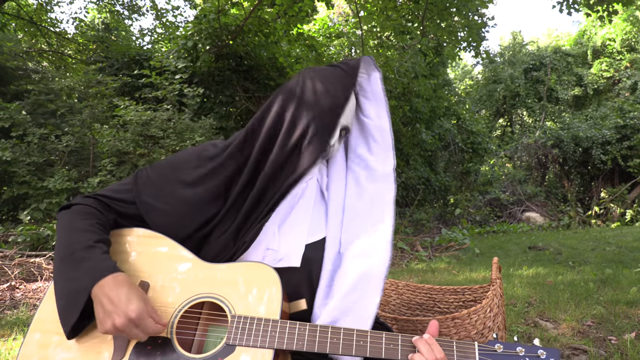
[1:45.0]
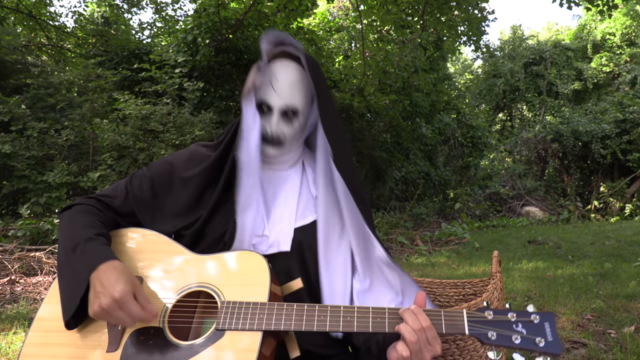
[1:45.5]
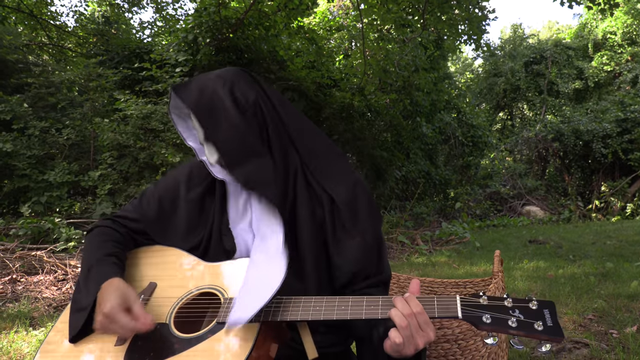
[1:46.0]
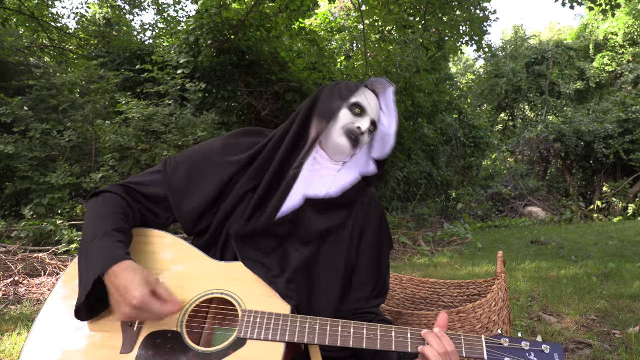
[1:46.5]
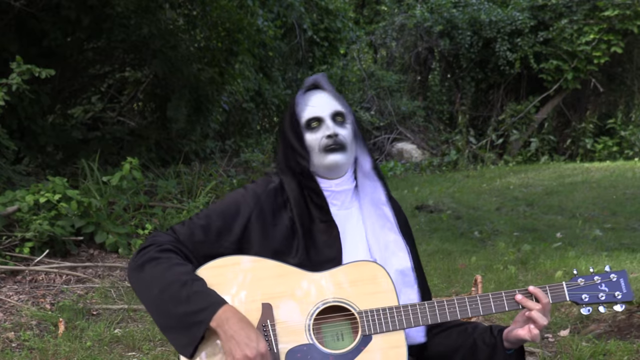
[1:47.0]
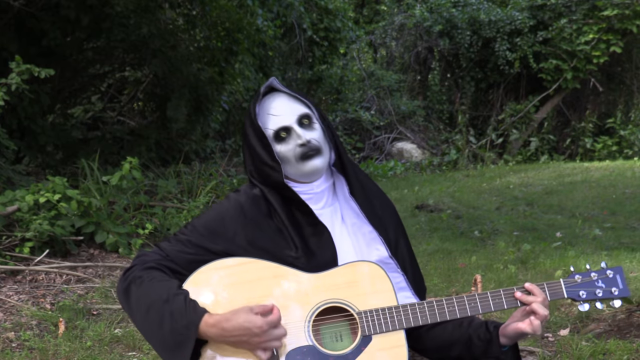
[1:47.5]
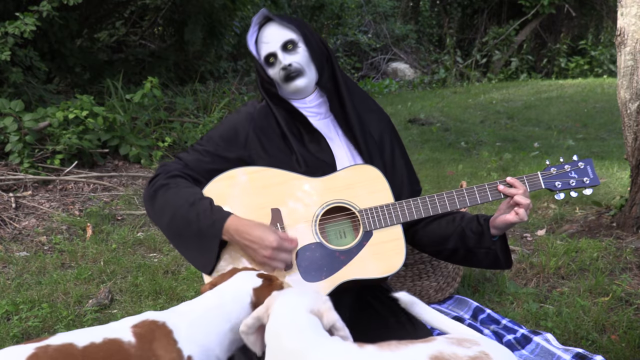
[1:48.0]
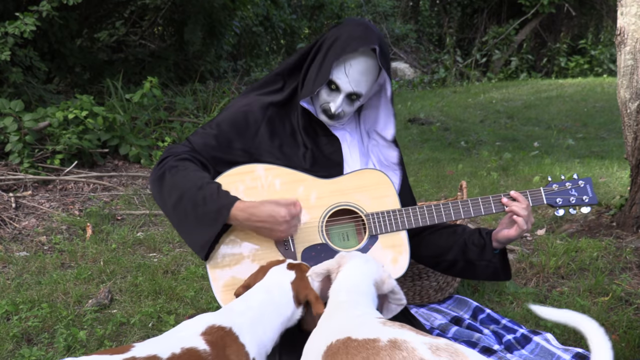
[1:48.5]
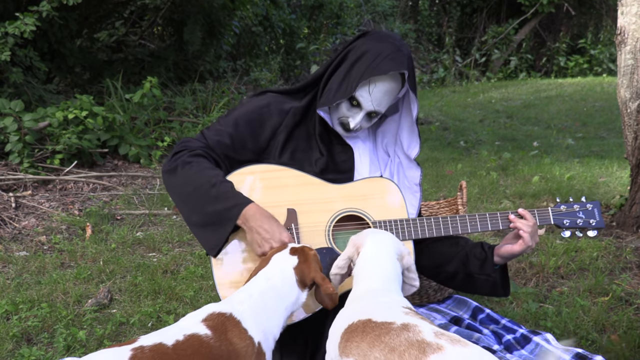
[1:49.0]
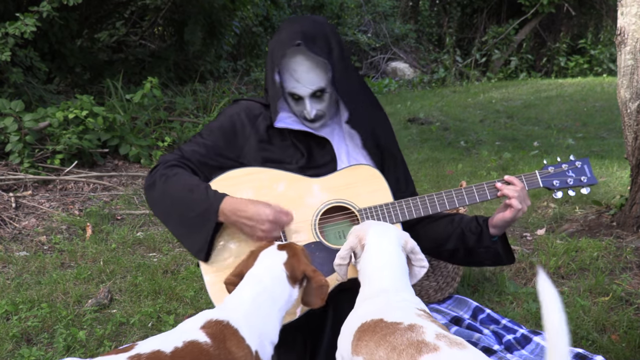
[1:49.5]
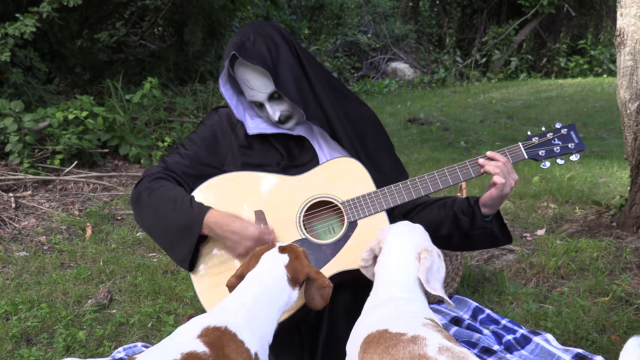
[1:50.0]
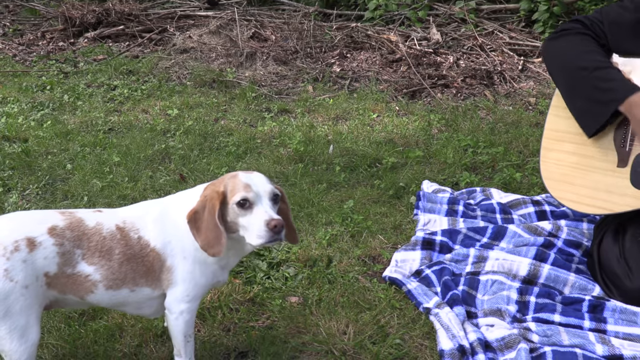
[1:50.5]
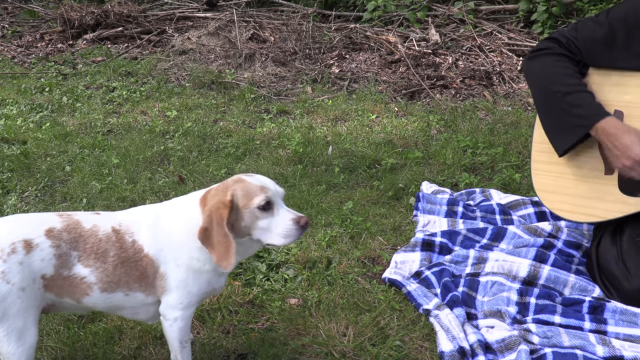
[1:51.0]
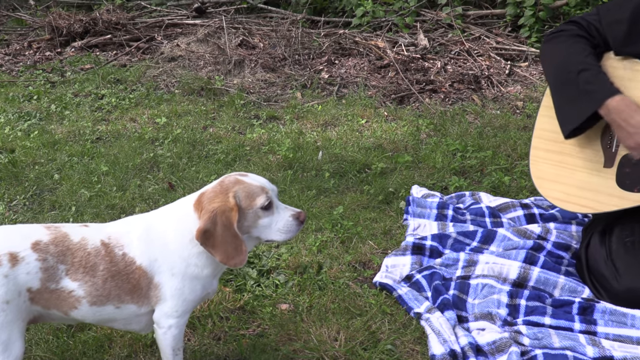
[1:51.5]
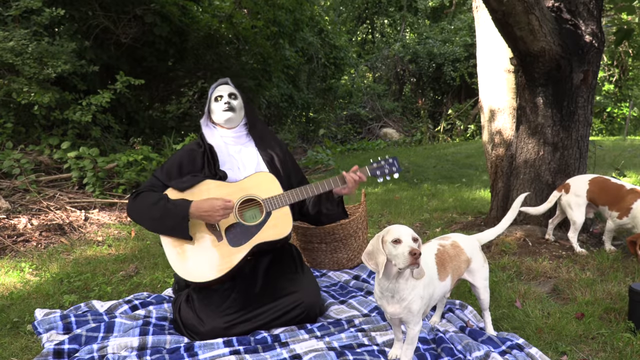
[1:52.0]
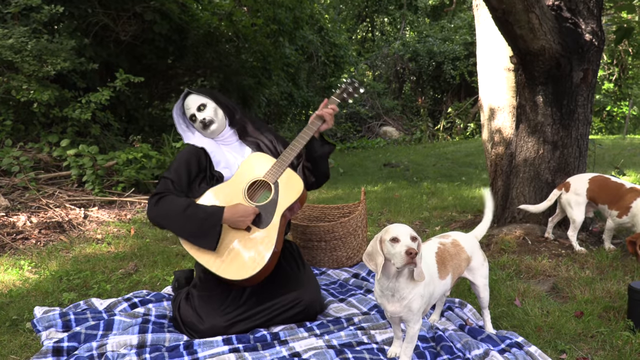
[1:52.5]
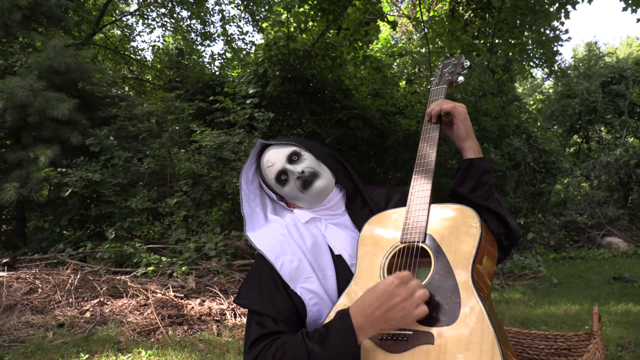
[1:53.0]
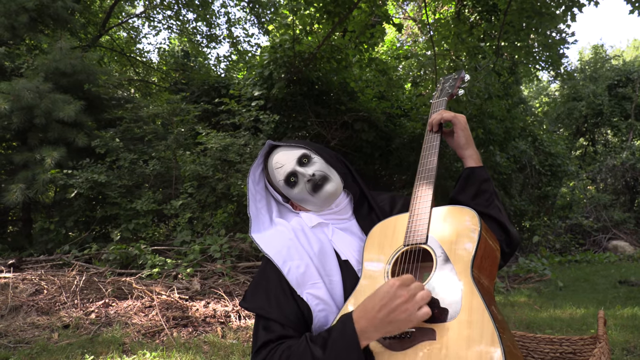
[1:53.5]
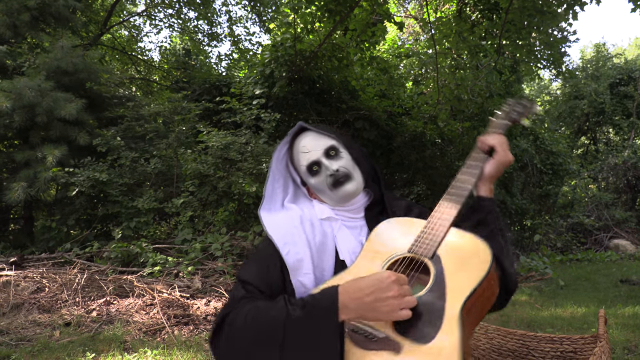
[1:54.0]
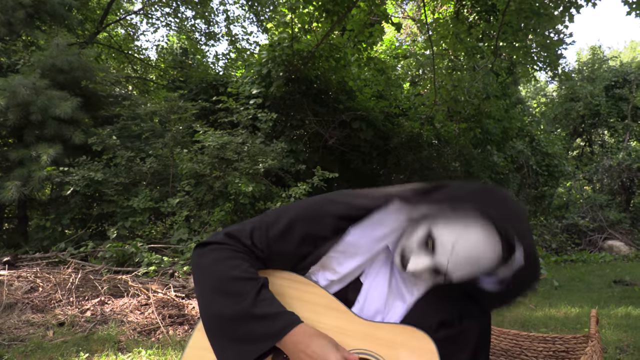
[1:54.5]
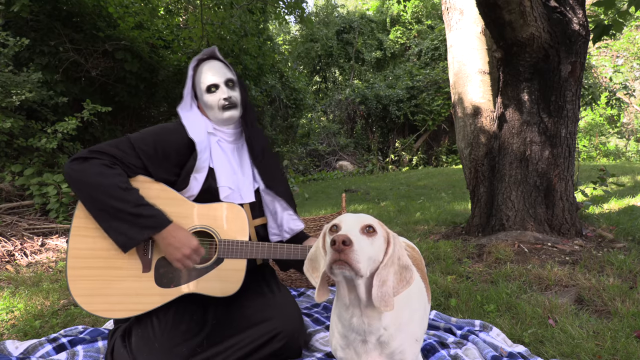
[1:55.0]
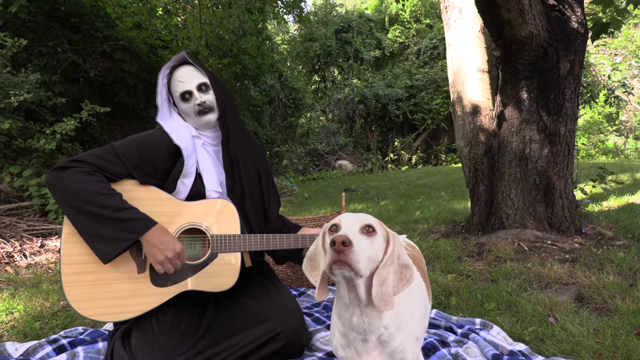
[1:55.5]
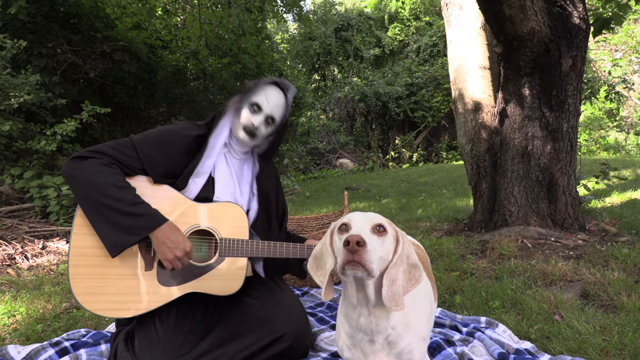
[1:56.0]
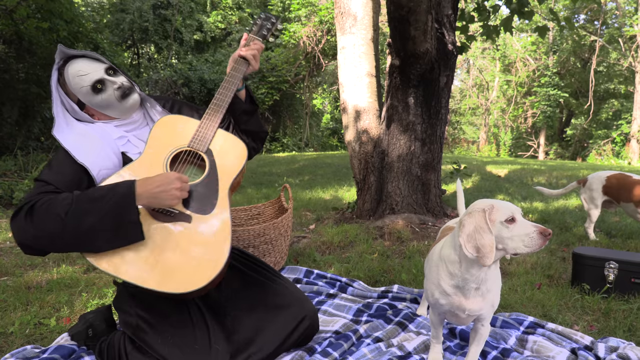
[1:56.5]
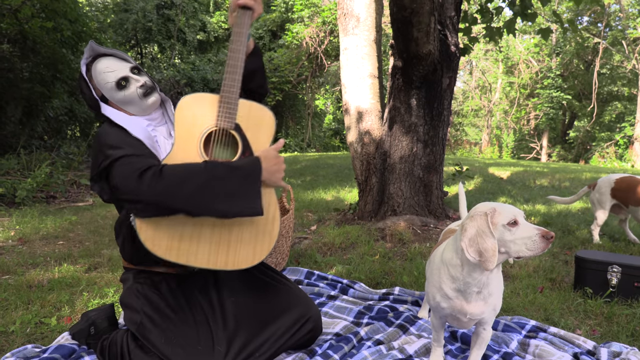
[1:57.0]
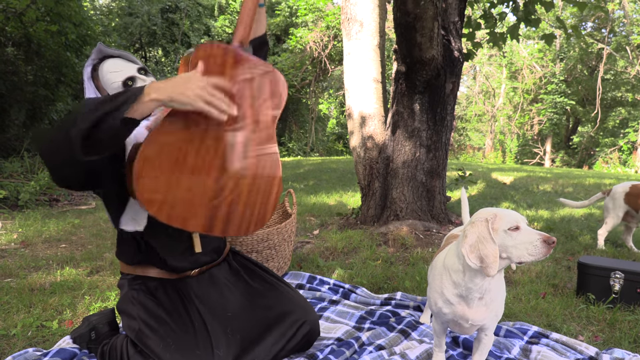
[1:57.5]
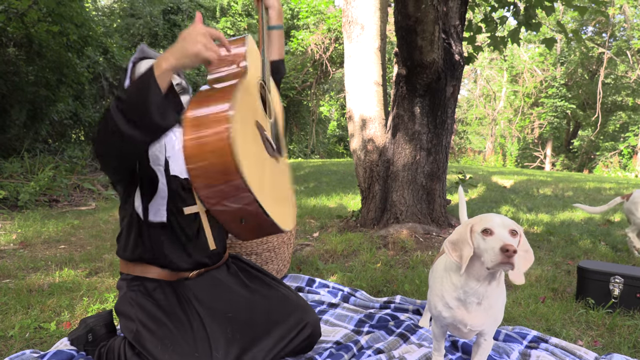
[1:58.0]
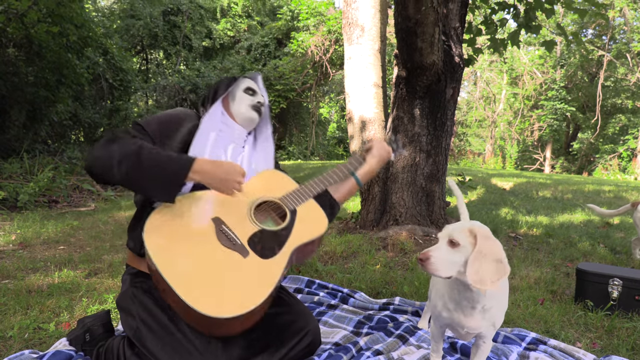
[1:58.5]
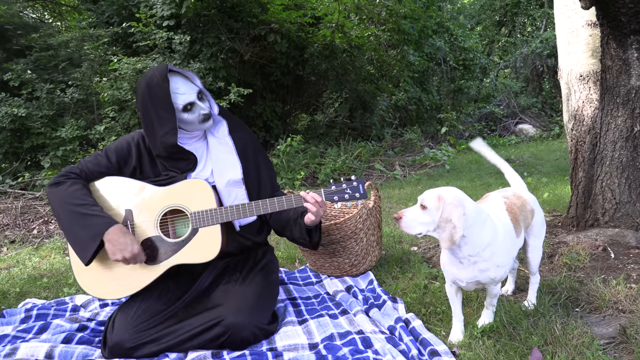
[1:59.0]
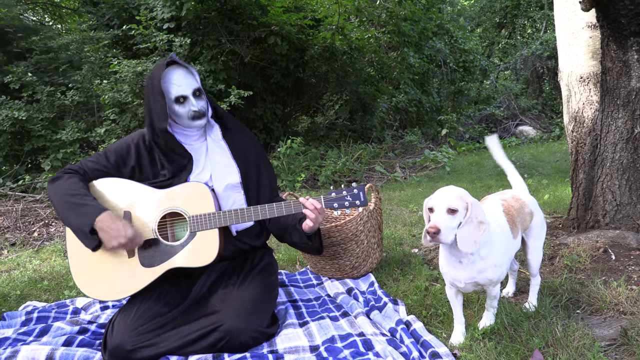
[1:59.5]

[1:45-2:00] The demon nun continues to play the guitar exuberantly, bopping his head back and forth and strumming with a pick. The dog sniffs his guitar, getting very close to him. One dog looks at the camera and then back at the demon nun. The demon nun keeps playing enthusiastically while the dogs start to lose interest, and he even flips his tan acoustic guitar around while he plays. There are more close-ups on the demon nun and less focus on the dogs, who do not seem quite as excited as before. There are lots of green trees, green grass and some mulch.